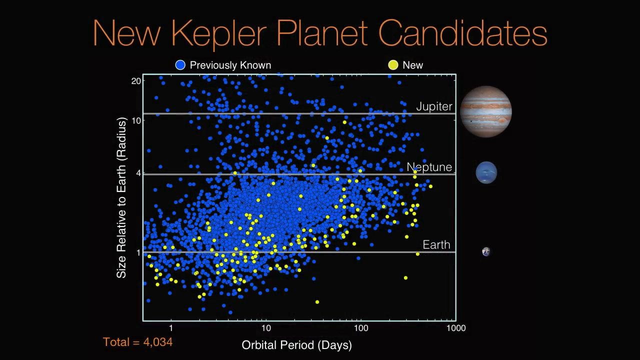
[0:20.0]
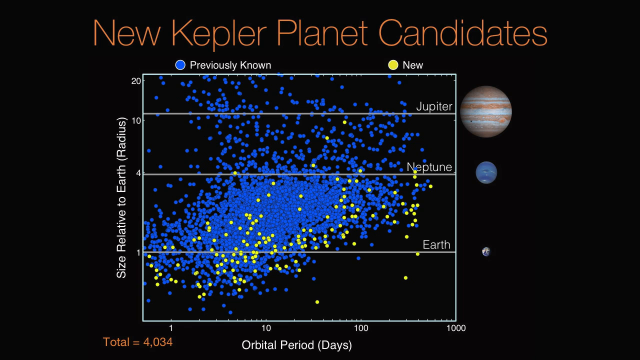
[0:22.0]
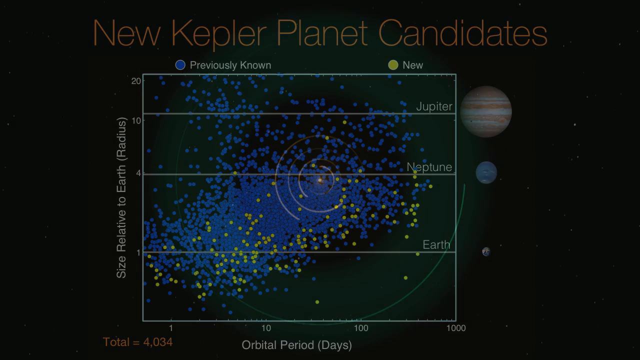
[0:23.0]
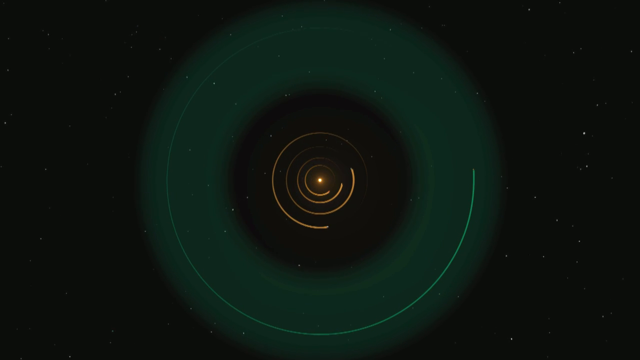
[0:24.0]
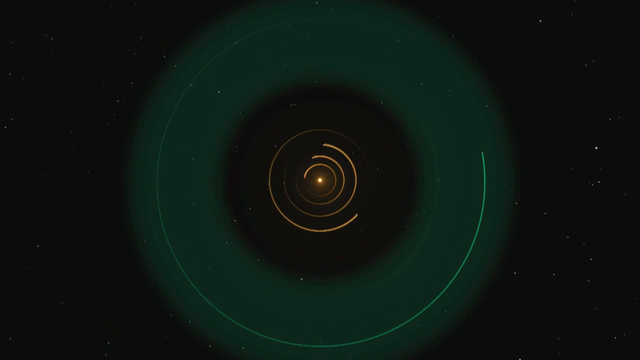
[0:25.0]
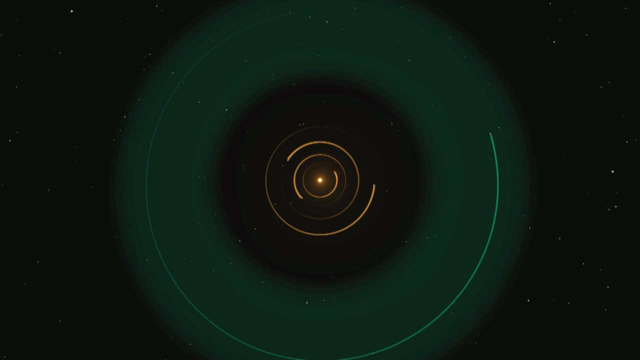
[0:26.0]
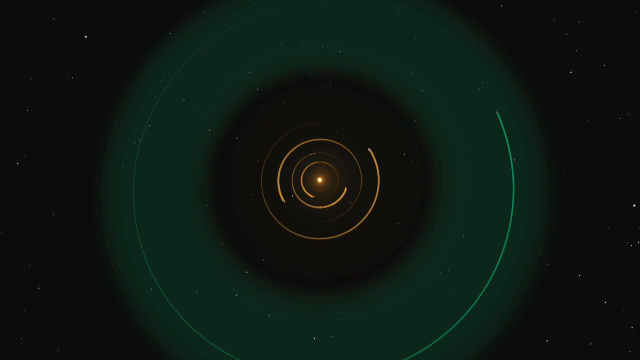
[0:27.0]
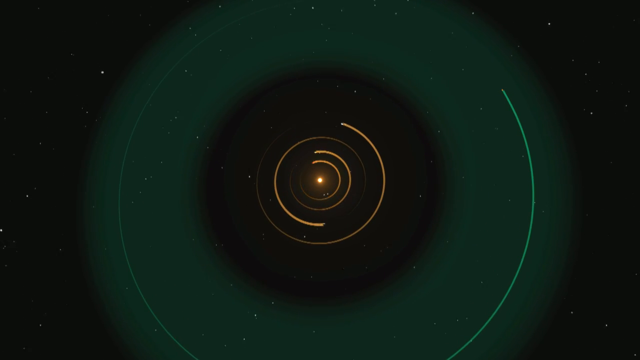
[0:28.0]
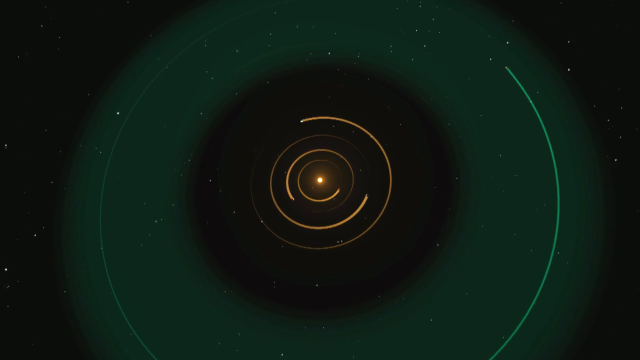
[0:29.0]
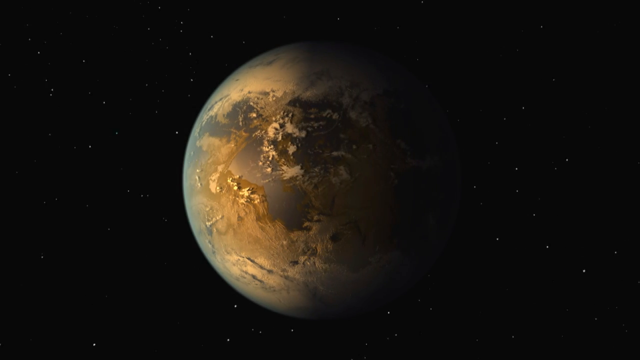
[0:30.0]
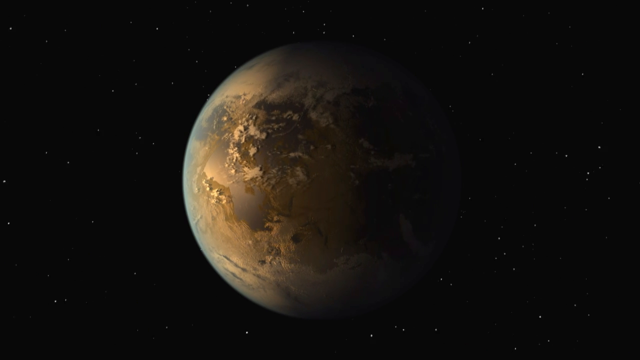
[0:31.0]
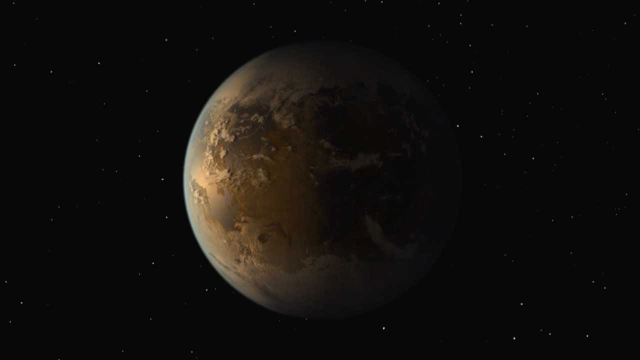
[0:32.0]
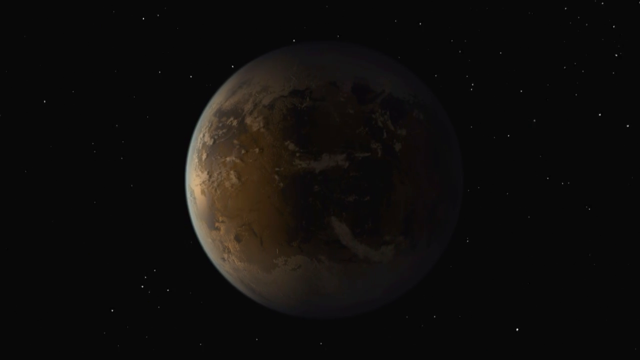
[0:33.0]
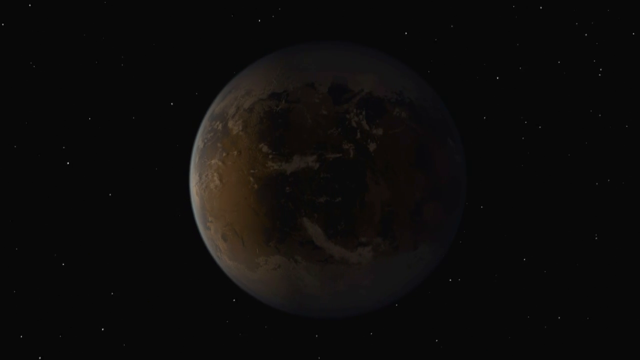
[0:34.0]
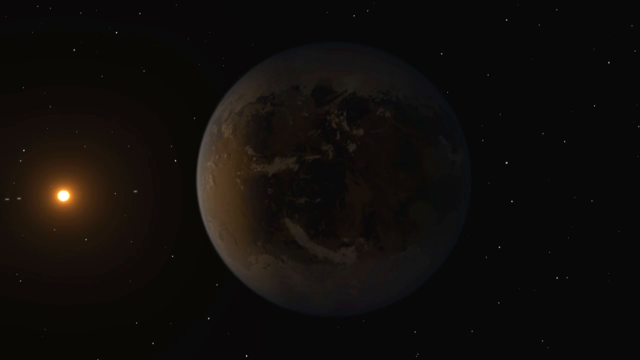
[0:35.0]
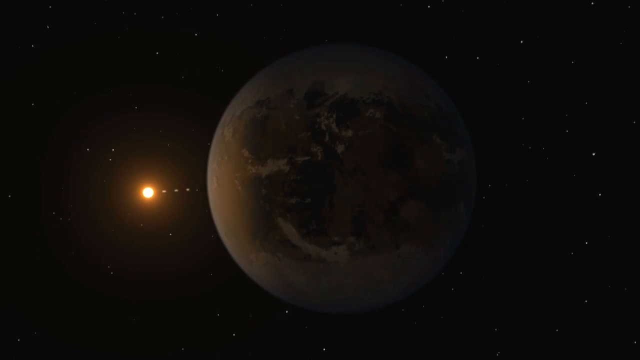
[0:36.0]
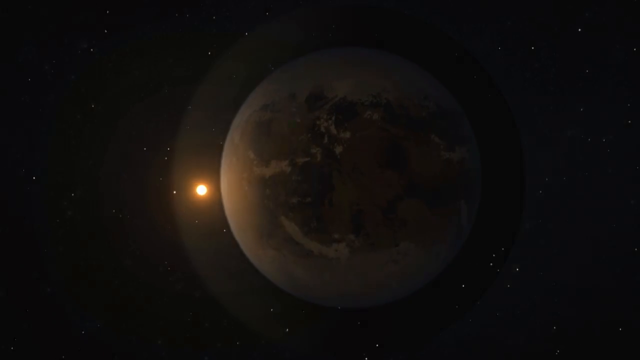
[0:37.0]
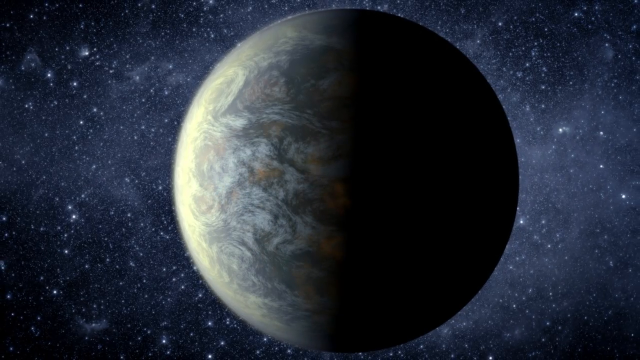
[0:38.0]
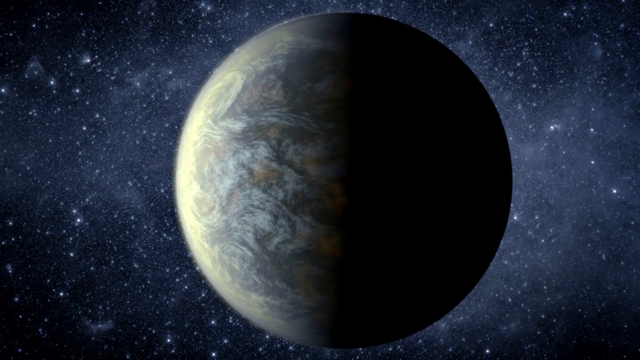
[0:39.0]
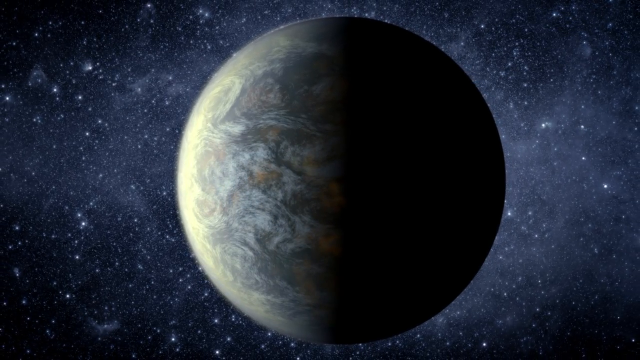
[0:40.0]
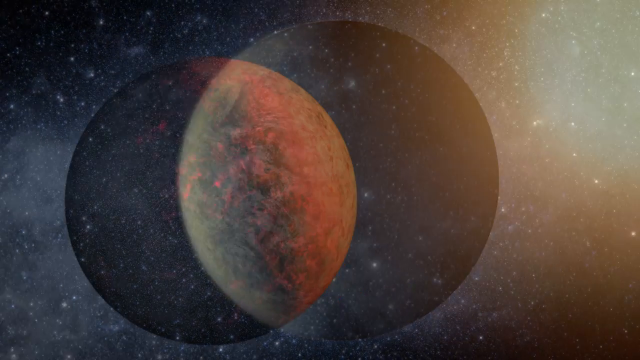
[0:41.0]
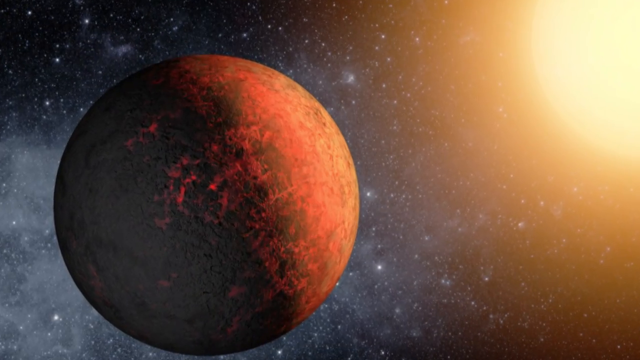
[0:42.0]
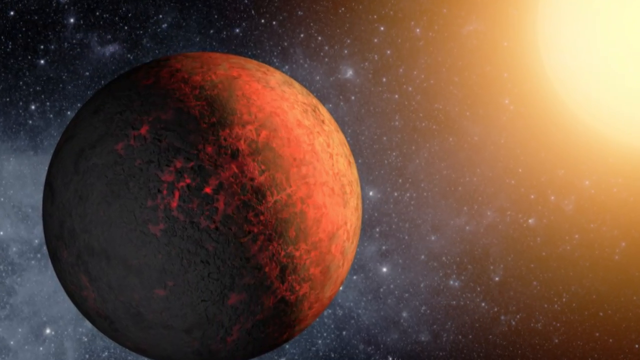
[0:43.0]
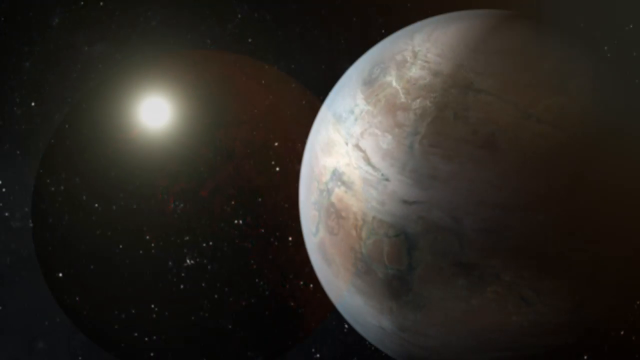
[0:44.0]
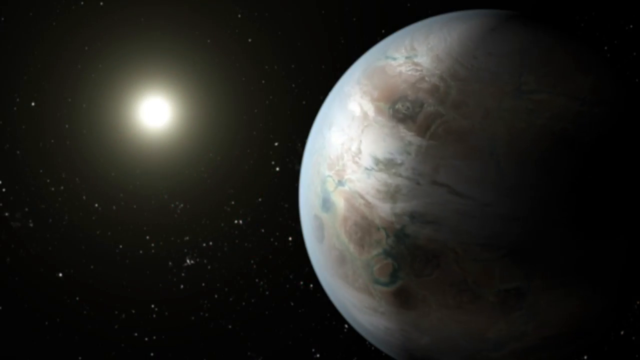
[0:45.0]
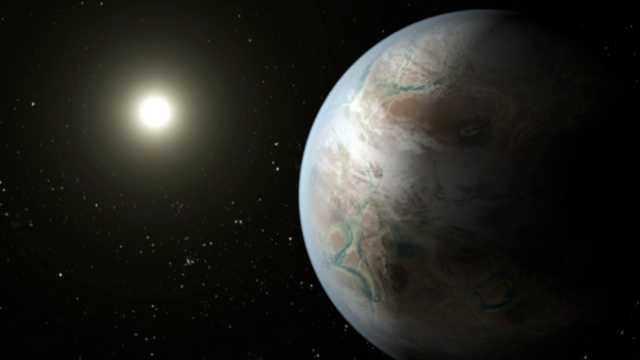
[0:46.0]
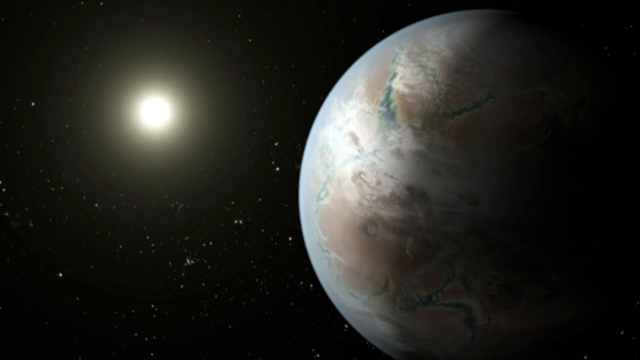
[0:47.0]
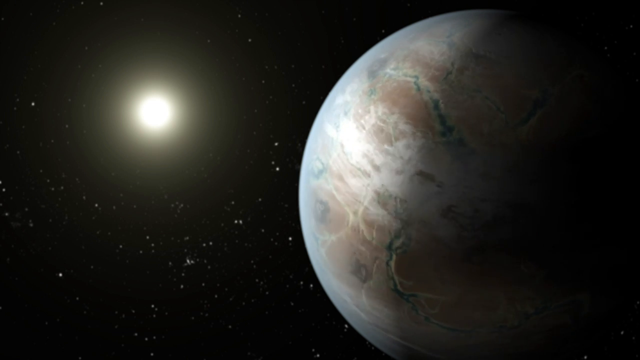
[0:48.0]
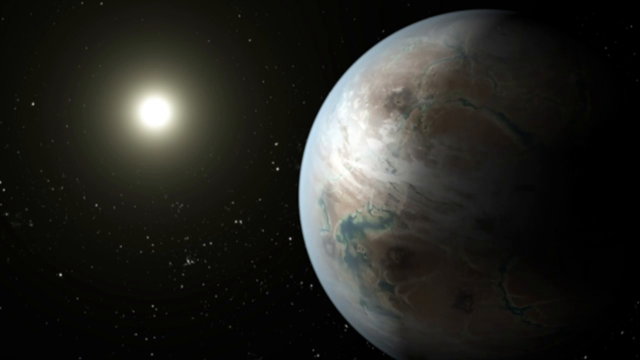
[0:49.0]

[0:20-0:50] A scatterplot graph is titled "new Kepler planet candidates" in red text on a black background. On the right are pictures of three planets, Jupiter, Neptune and Earth, which are also labeled on the graph; the graphic is a white rectangle with a line for each planet. Blue dots are labeled "previously known" and yellow dots are labeled "new," and the dots are scattered all over the graph, apparently showing new planet candidates. Next, a digital image of a star has lots of yellow lines surrounding or circling it, with a large green disc around that and a green line circling it as well. Another shot shows a planet rotating in space, with light; the sky behind it is completely black with stars scattered around. This planet kind of looks like it has a lot of landmass, kind of grayish brown, and a bright yellowish-orange sun appears on the left. Another planet is half hidden in shadow, with the other half covered in swirly clouds, and there appear to be lots of stars in the back. Another planet has a red, crusty surface, kind of like Mars, with a large sun on the right. Finally, a planet spins with a sun on the left; it looks kind of whitish, with a lot of land on the surface.